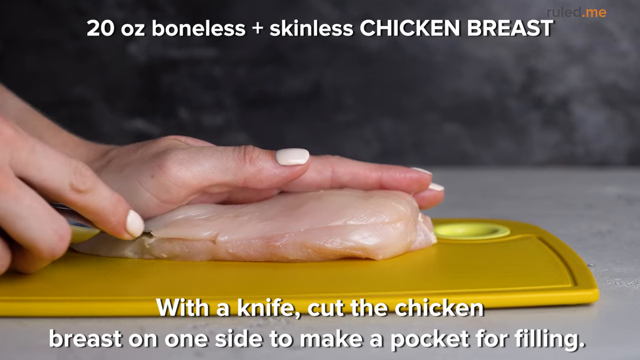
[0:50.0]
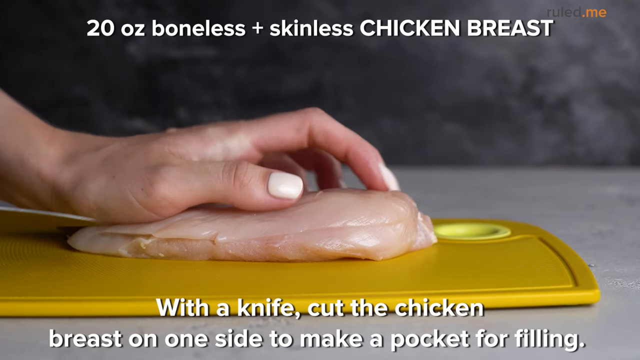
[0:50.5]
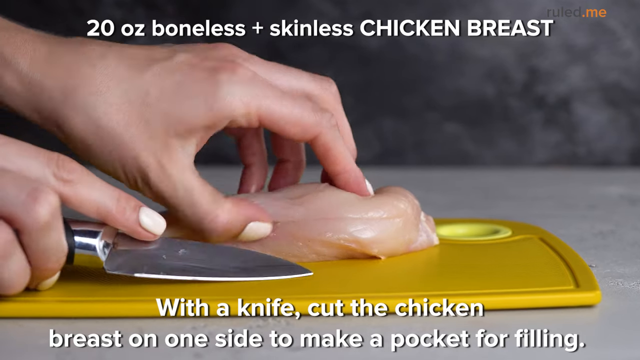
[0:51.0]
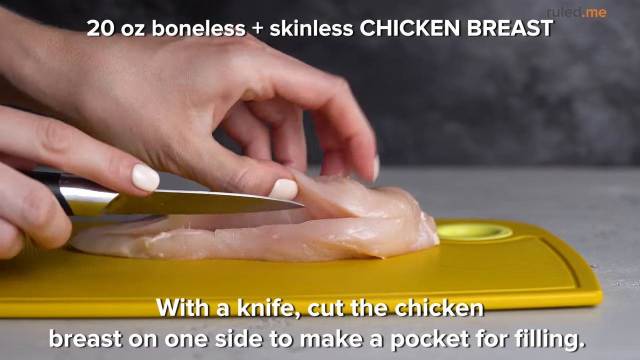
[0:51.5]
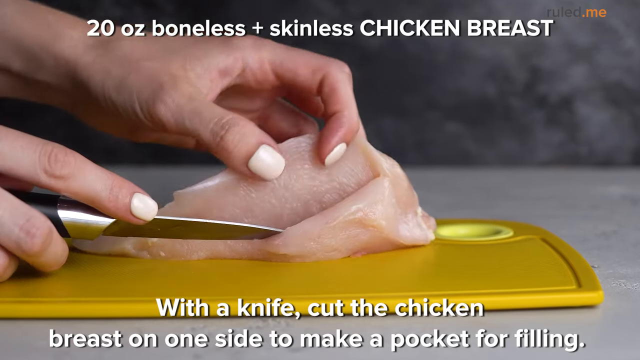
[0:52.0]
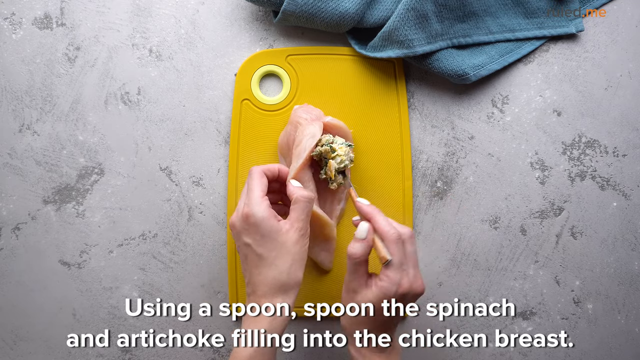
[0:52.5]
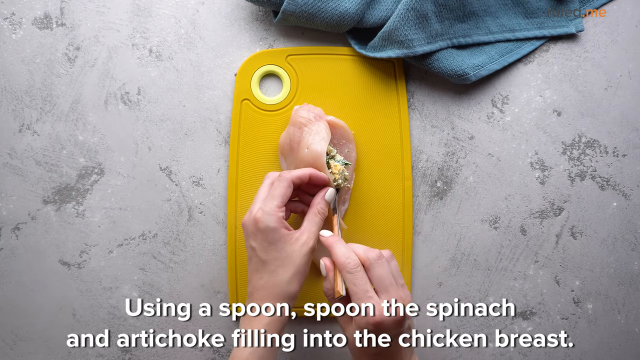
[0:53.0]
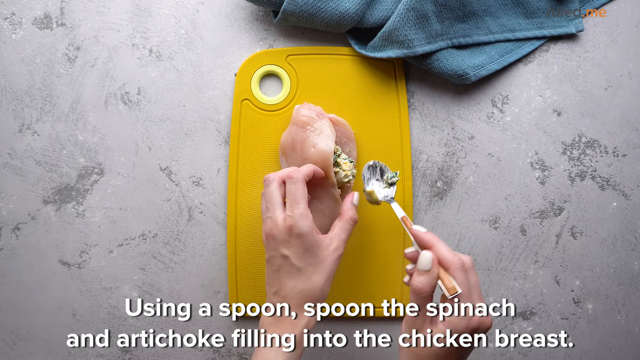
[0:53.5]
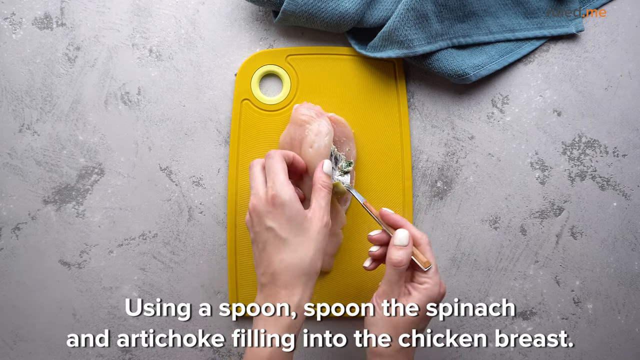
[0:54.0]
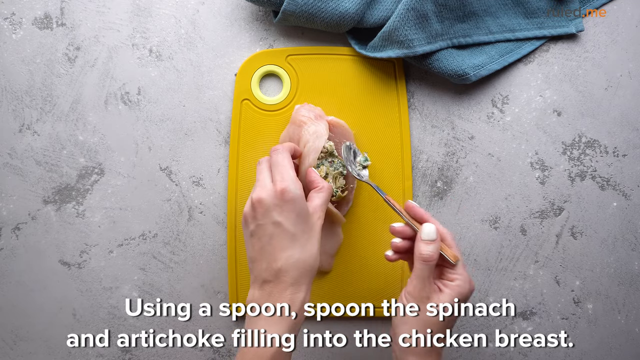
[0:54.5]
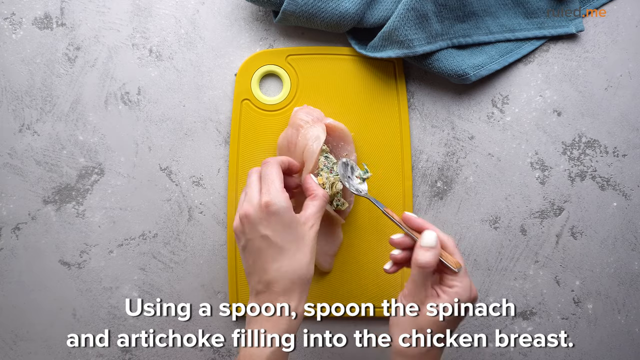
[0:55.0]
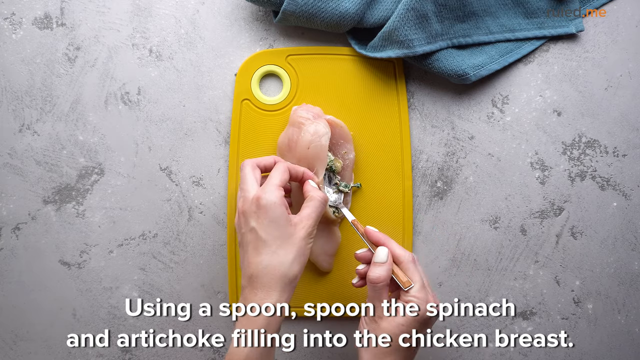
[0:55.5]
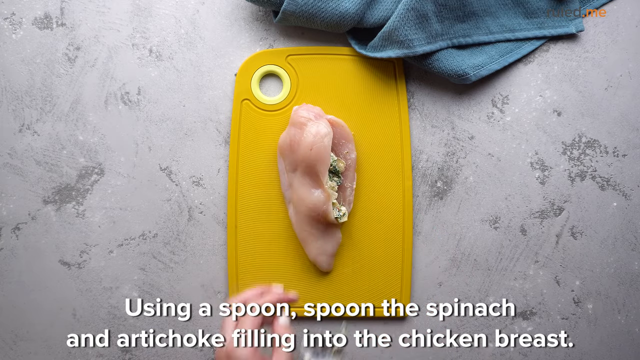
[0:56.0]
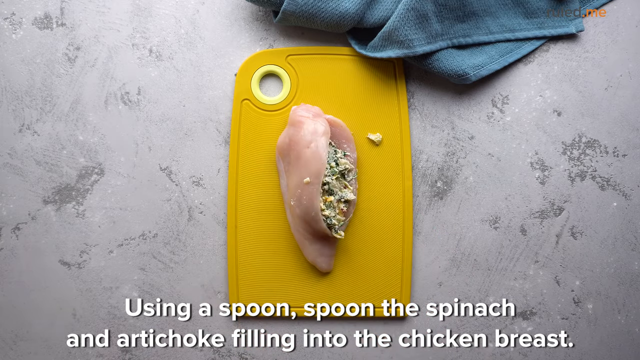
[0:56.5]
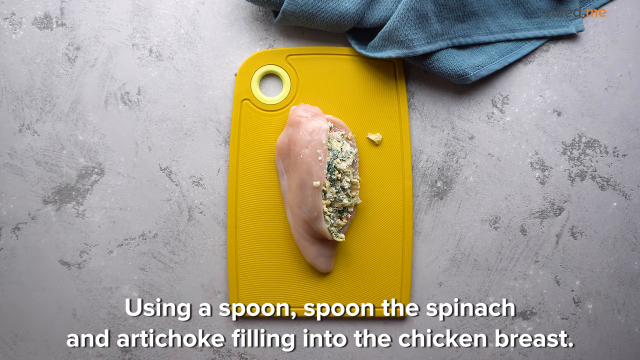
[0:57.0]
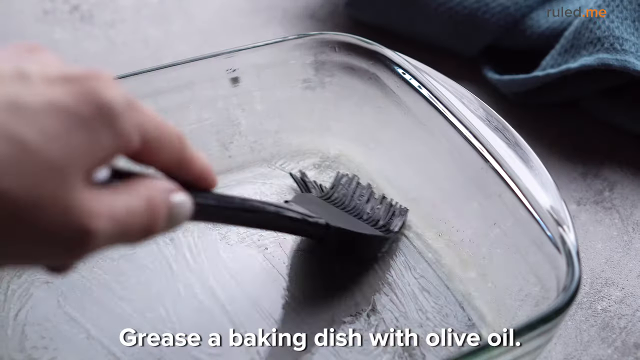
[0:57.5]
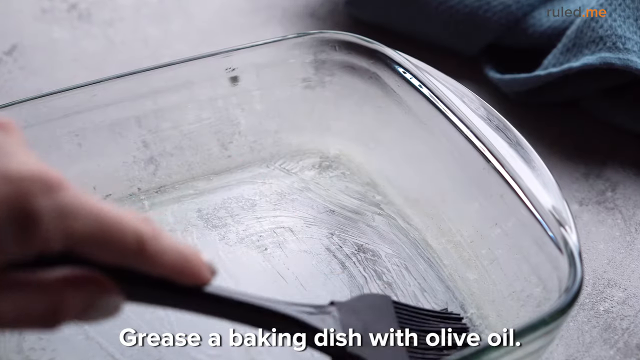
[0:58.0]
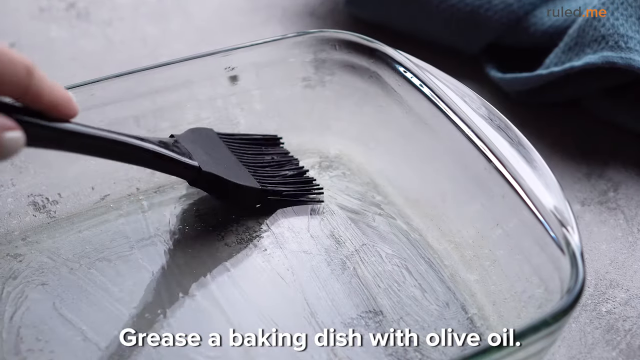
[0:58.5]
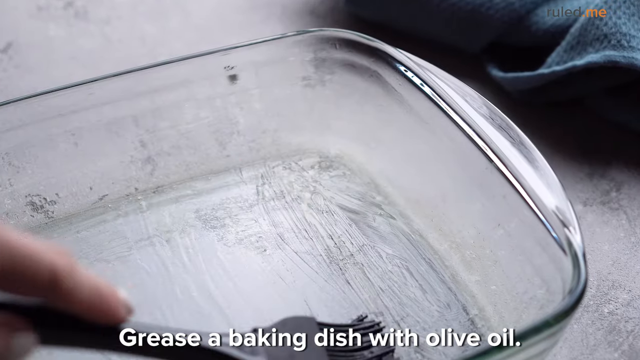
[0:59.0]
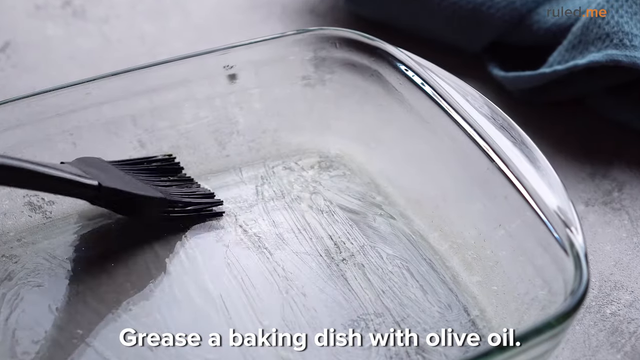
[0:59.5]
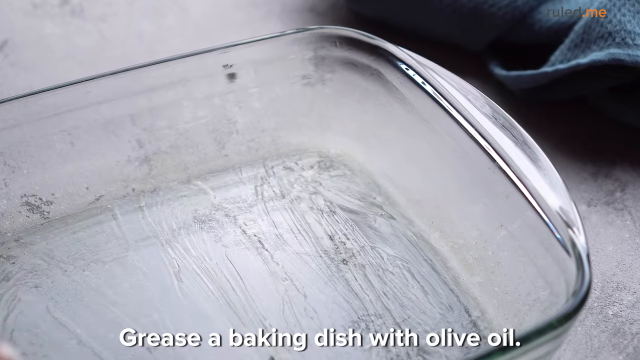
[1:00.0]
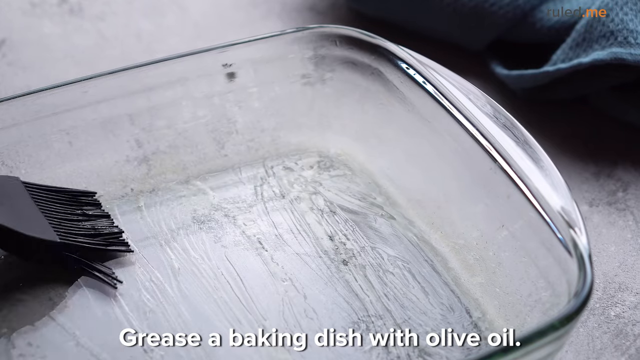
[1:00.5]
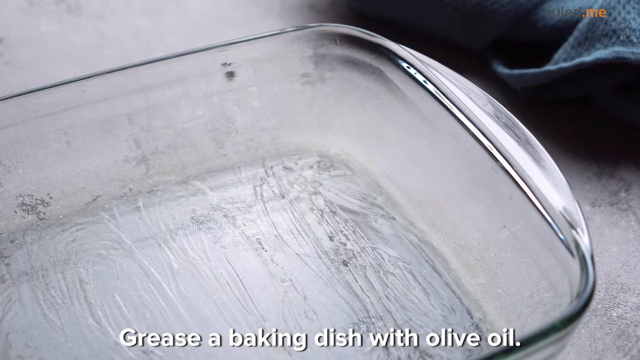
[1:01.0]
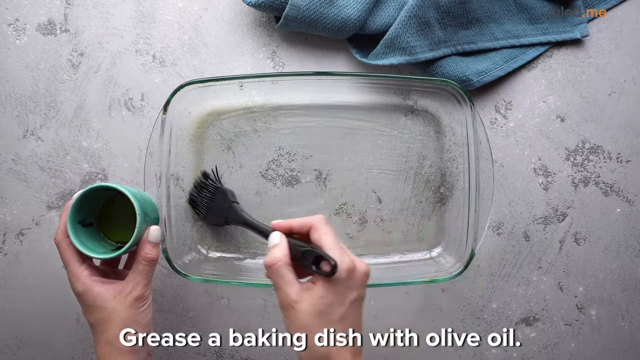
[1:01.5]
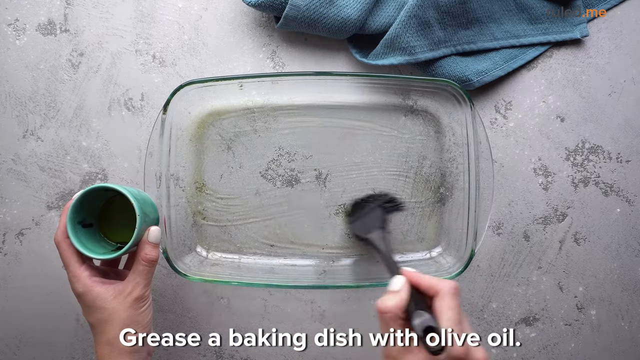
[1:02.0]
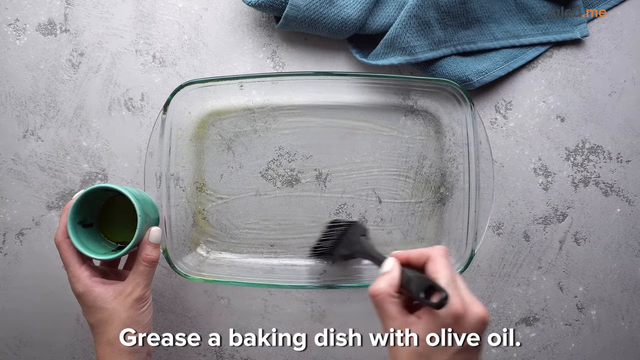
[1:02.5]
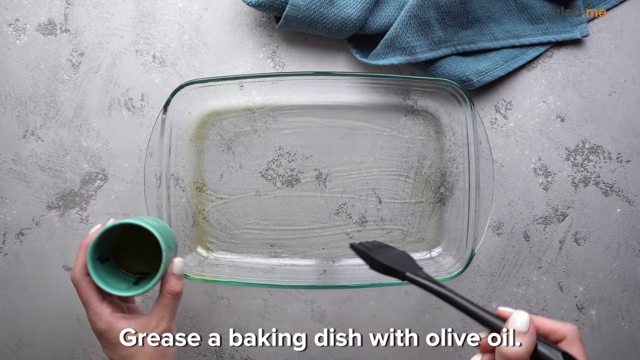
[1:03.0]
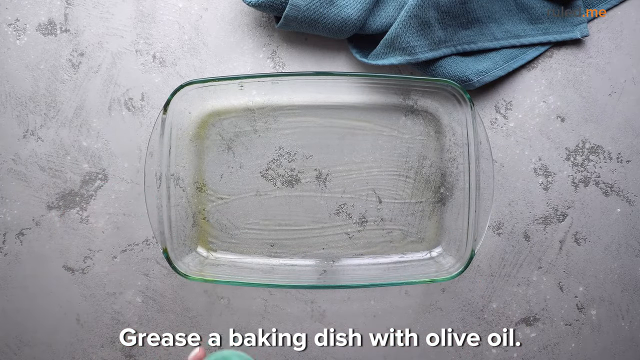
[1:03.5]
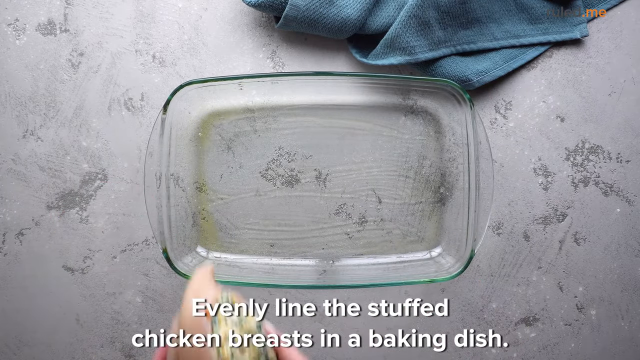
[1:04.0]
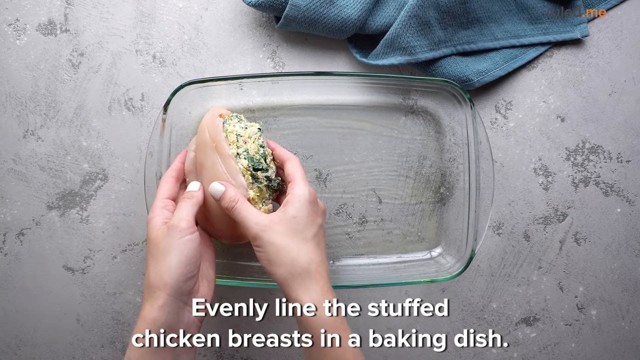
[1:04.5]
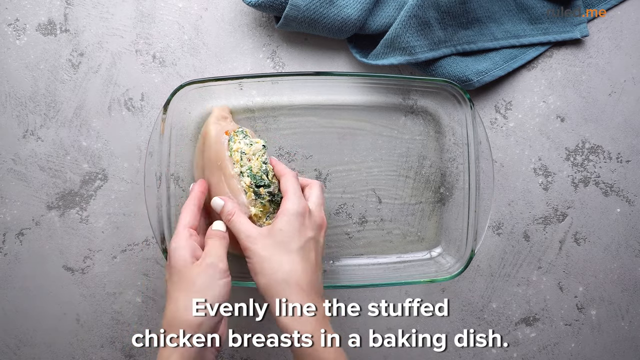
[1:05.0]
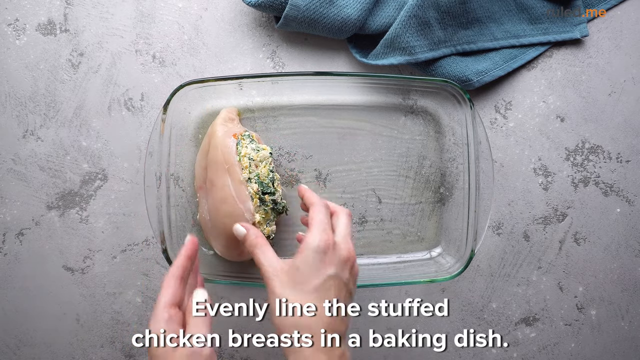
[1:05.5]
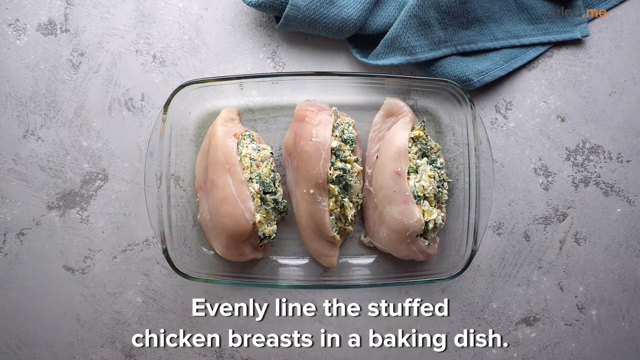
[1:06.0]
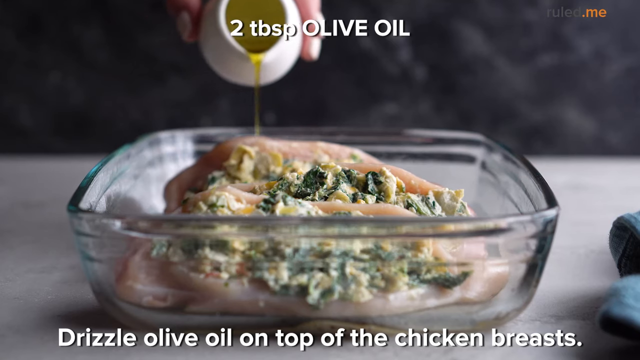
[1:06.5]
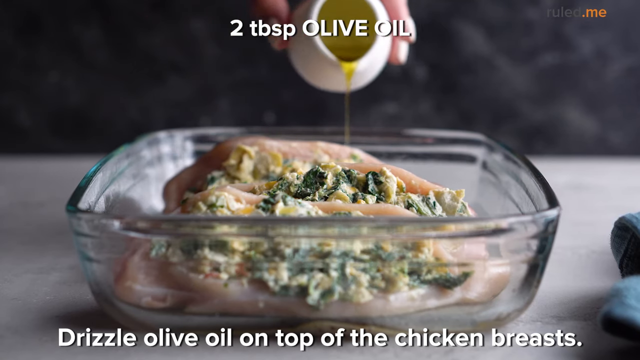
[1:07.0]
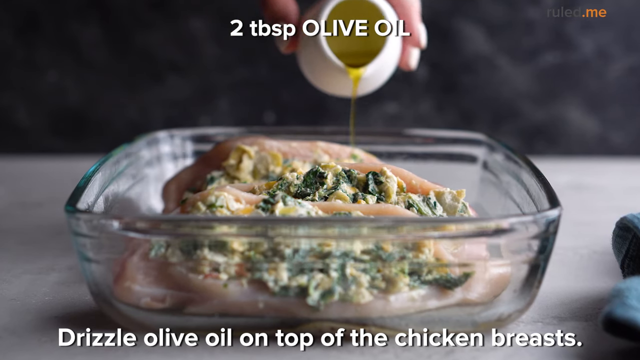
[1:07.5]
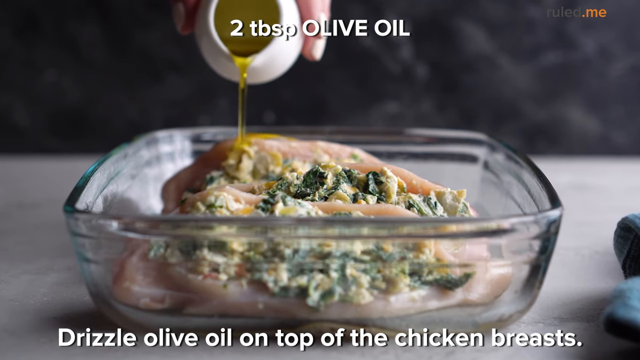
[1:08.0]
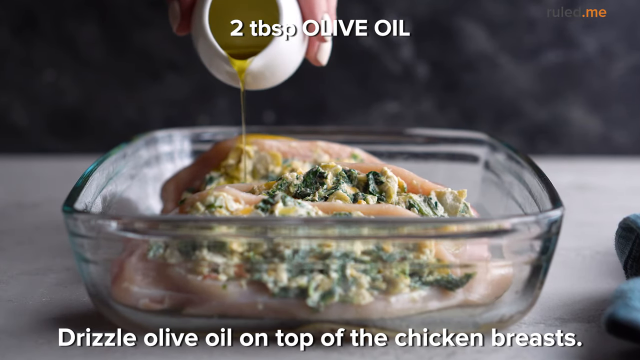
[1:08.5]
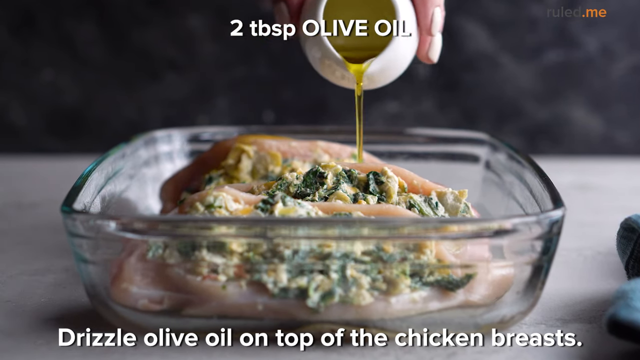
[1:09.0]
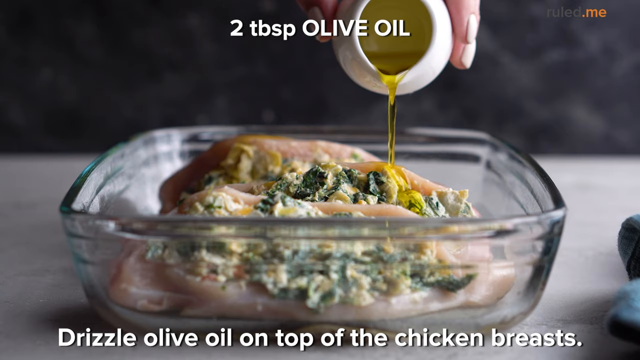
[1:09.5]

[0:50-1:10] Text reads "20 ounce boneless and skinless chicken breast." A person cuts a chicken breast open and fills it with the stuffing made from the blended ingredients. They then brush oil onto a clear glass pan, lay the chicken breasts in a row in the pan, and drizzle two tablespoons of olive oil lightly over them from a tiny bowl. The same person, identifiable by her white nail polish, does the cutting, stuffing and greasing of the pan. The blue dish rag is nearby, and the gray marbled or stone-like surface is used in all the scenes.